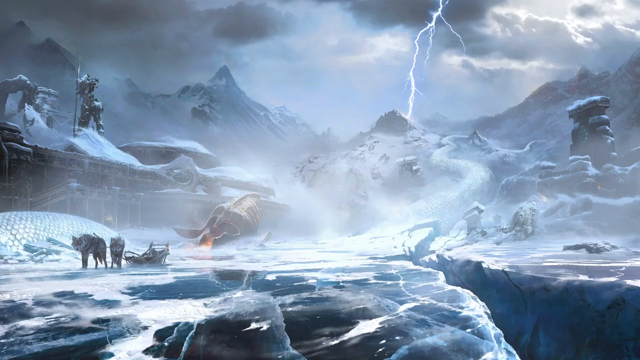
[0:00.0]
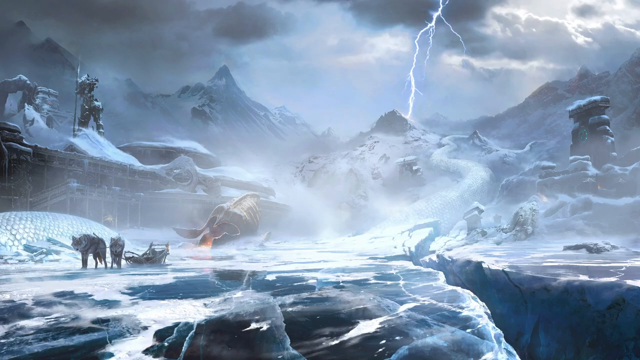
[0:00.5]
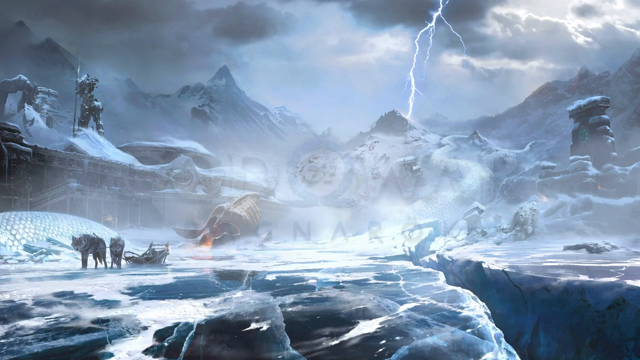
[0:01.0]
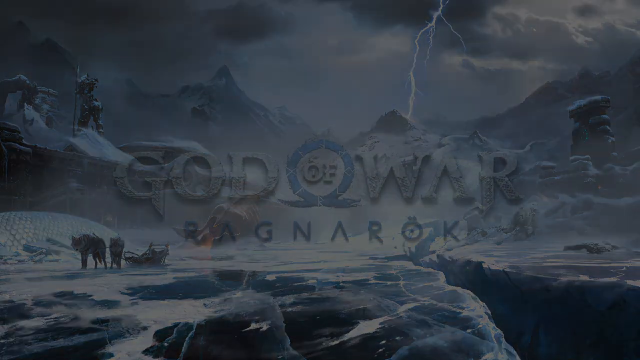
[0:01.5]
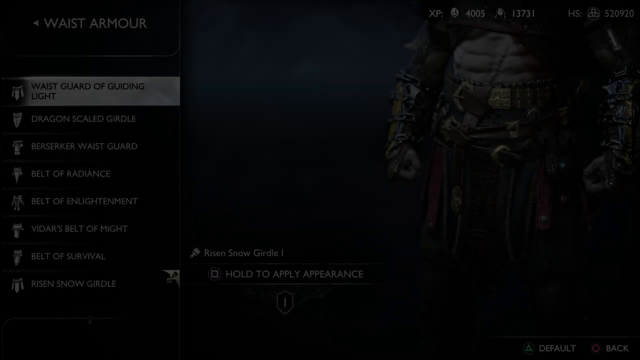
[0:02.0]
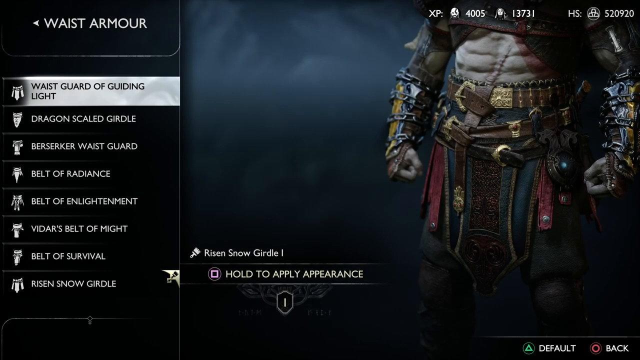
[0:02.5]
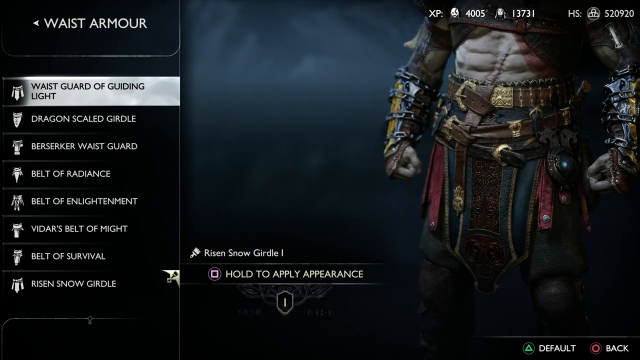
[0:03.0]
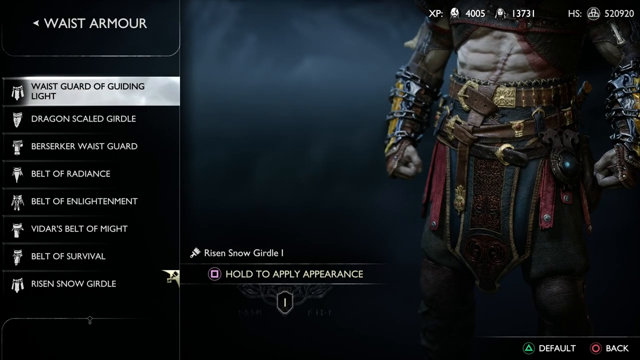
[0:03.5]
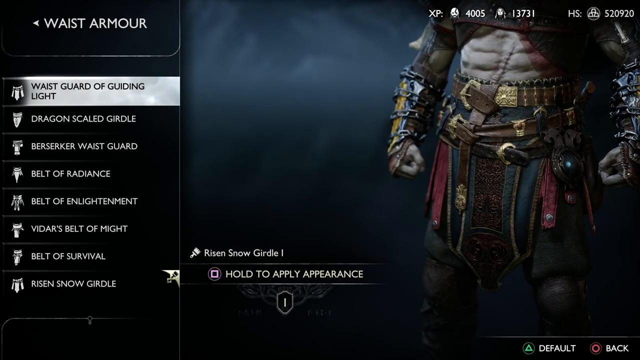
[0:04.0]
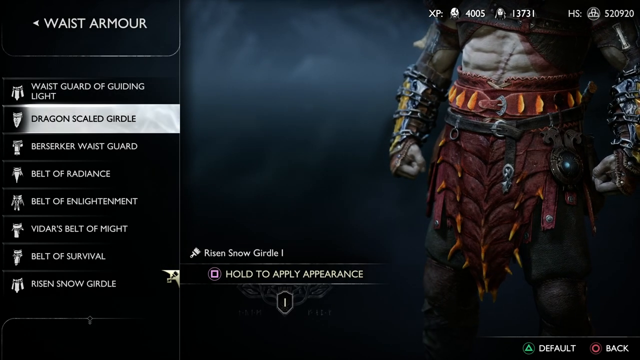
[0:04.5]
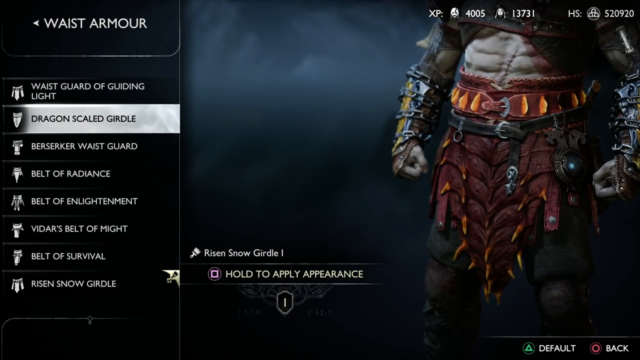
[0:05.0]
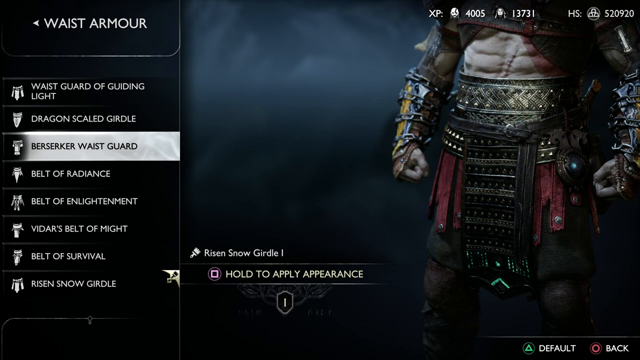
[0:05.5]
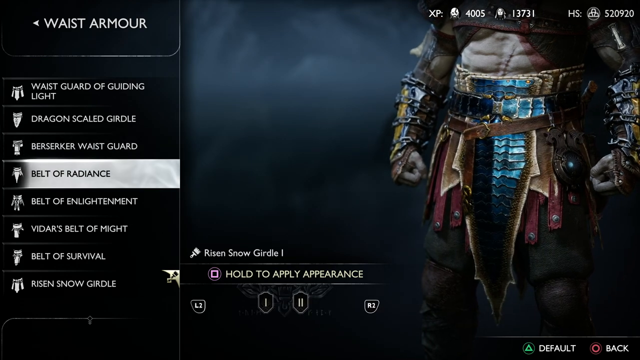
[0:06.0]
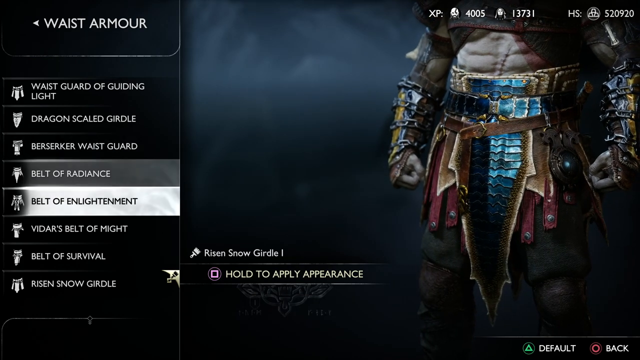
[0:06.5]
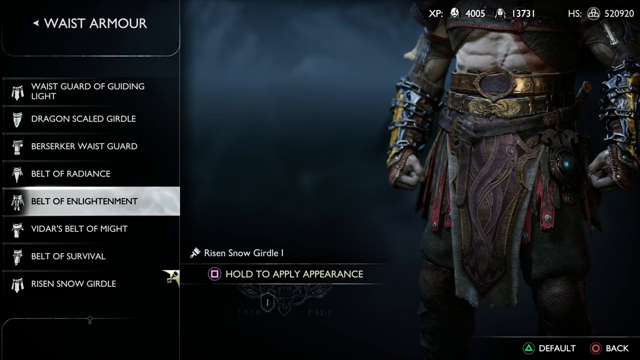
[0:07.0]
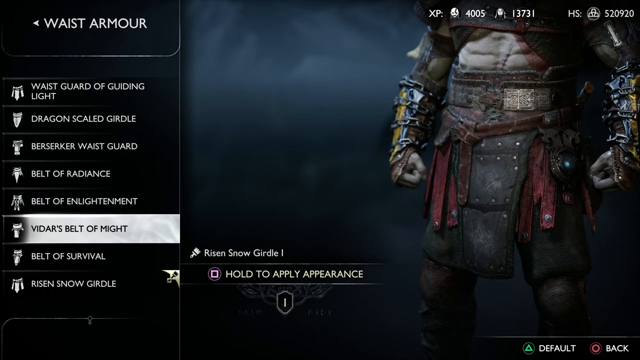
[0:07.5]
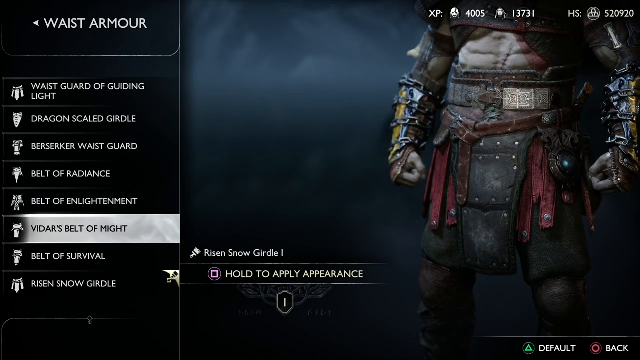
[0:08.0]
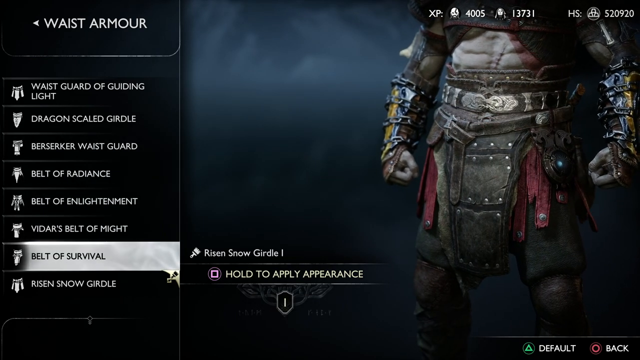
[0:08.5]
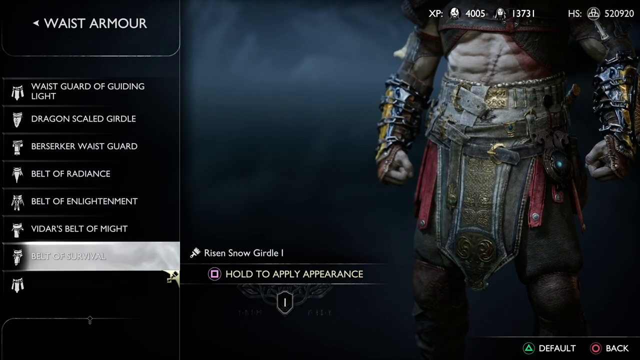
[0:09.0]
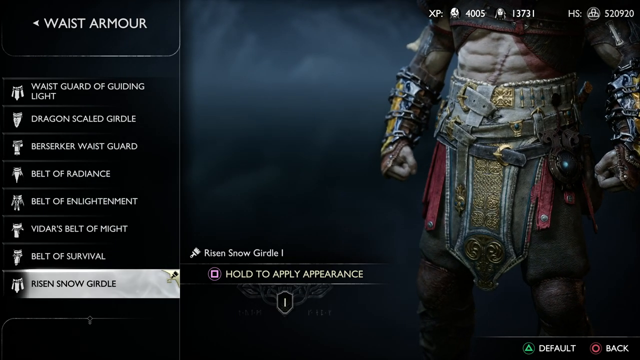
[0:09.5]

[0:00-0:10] The video opens on what appears to be a loading screen from a video game, depicting a snowy, fantasy-like scene. On the bottom left, wolves lead a sled with no rider in it, and some kind of structures are on the left behind the wolves. The whole scene has very misty, dark weather, with lightning flashing down through the sky toward the top. On the right are rock formations and cracks in the snowy ground.